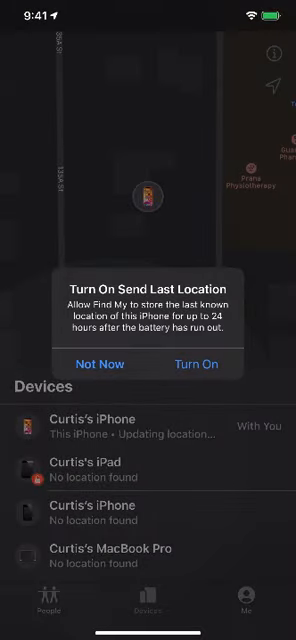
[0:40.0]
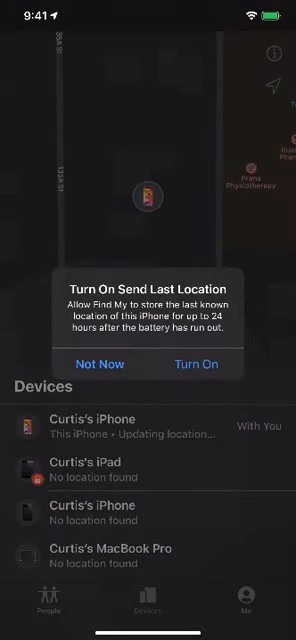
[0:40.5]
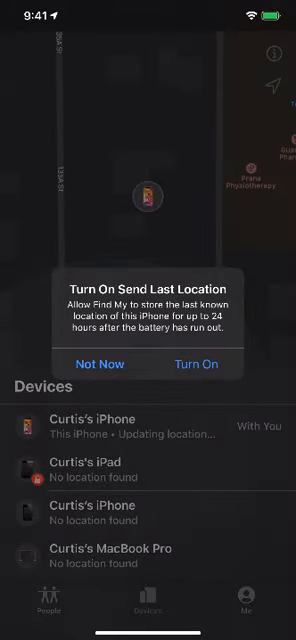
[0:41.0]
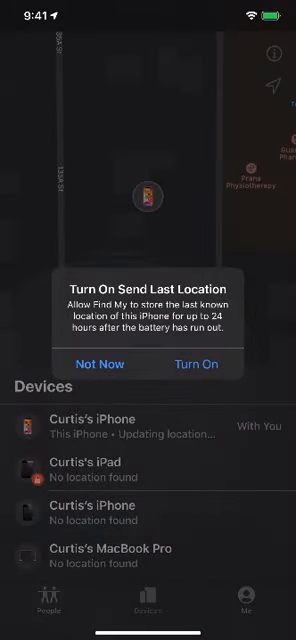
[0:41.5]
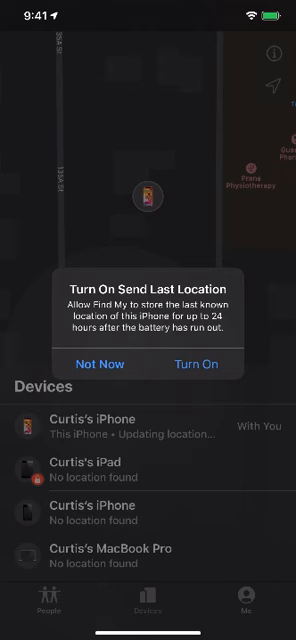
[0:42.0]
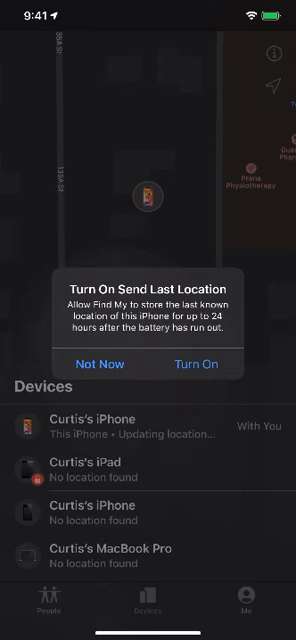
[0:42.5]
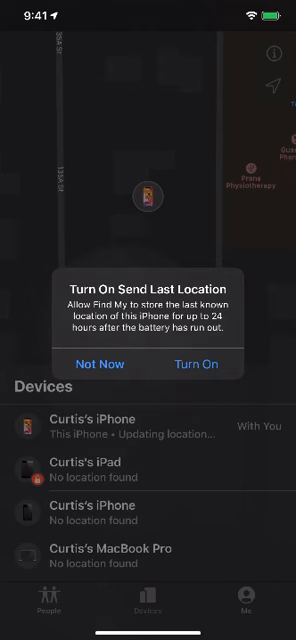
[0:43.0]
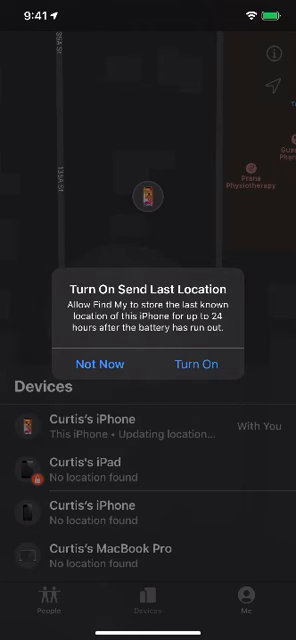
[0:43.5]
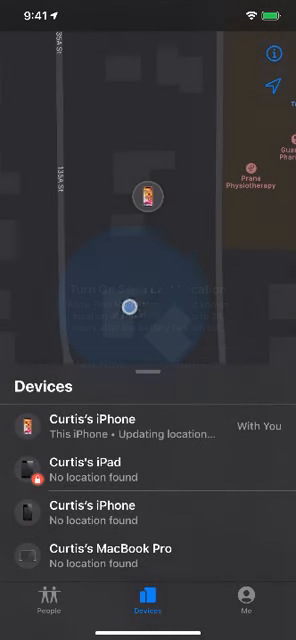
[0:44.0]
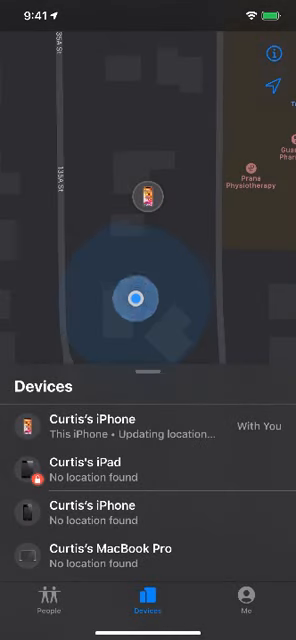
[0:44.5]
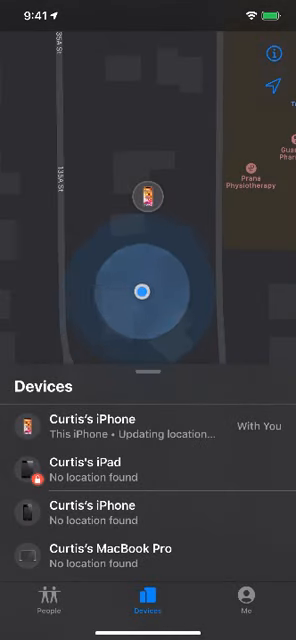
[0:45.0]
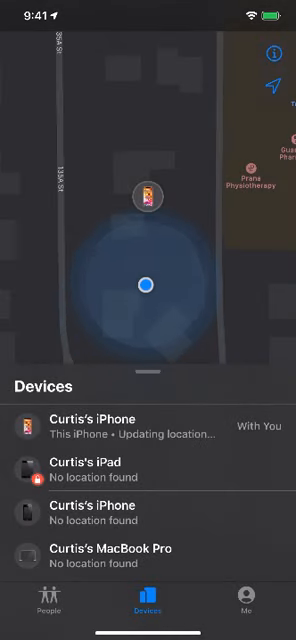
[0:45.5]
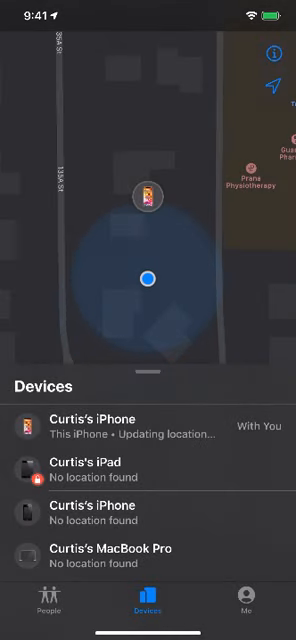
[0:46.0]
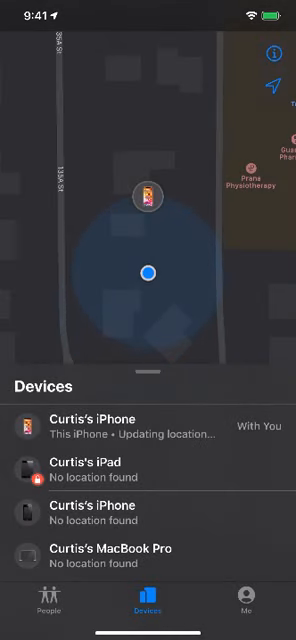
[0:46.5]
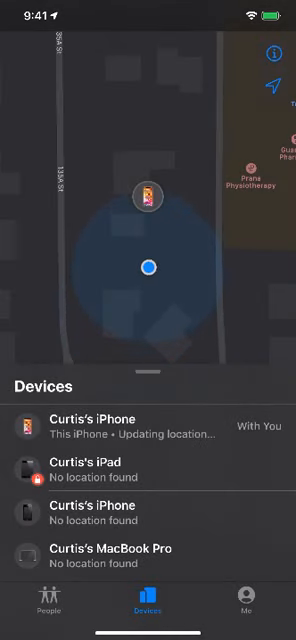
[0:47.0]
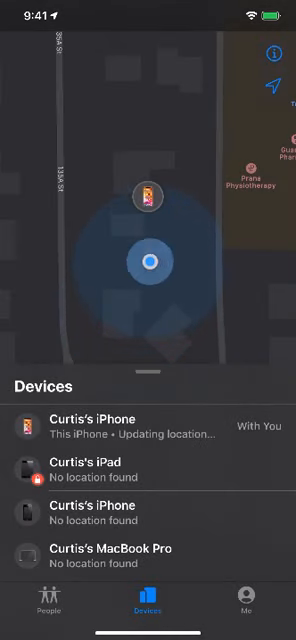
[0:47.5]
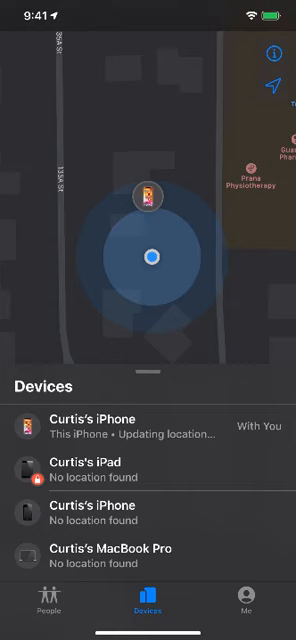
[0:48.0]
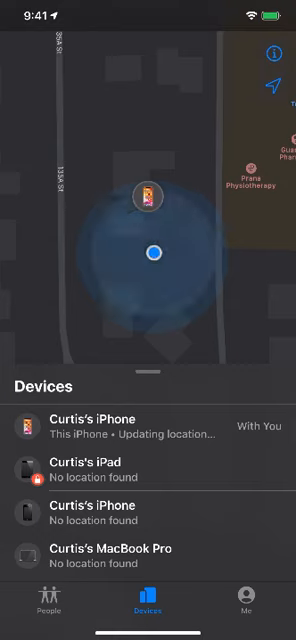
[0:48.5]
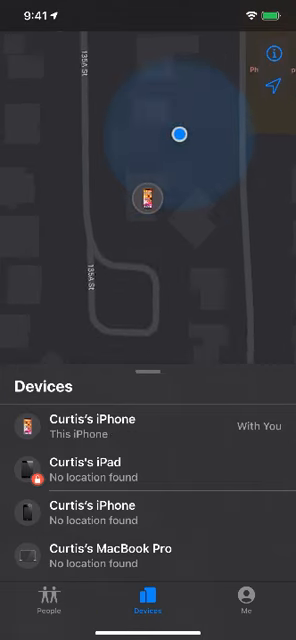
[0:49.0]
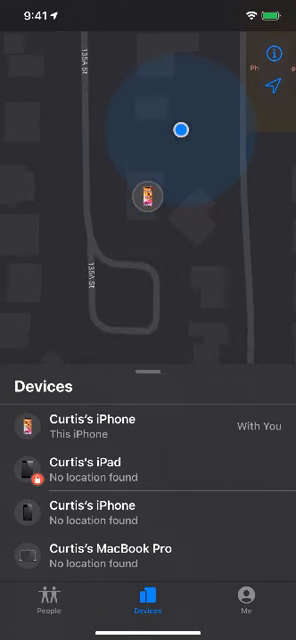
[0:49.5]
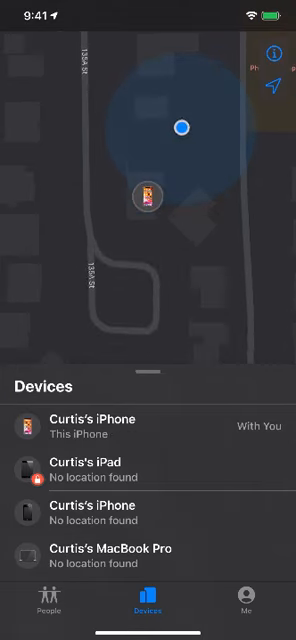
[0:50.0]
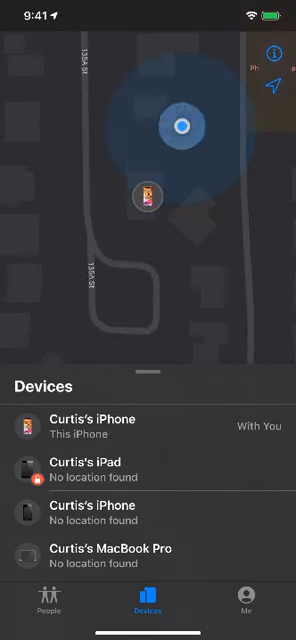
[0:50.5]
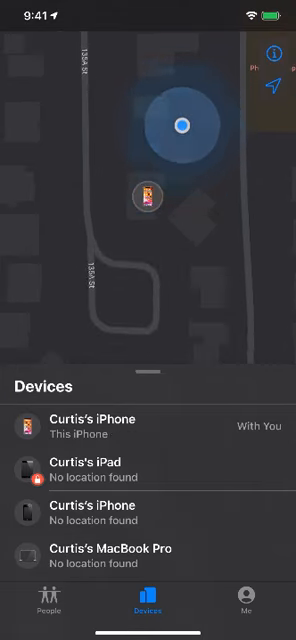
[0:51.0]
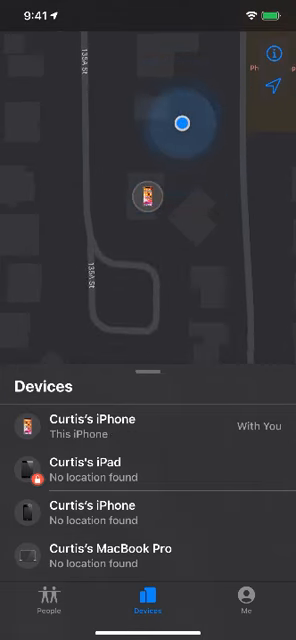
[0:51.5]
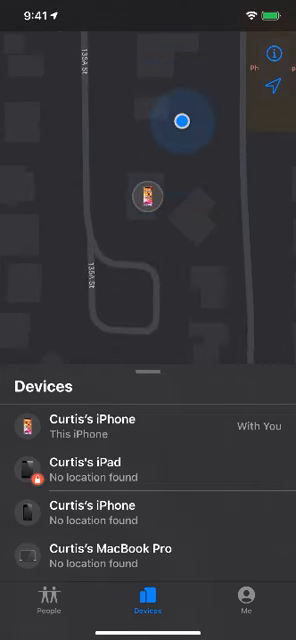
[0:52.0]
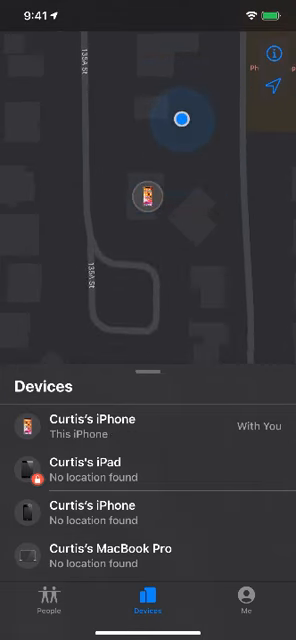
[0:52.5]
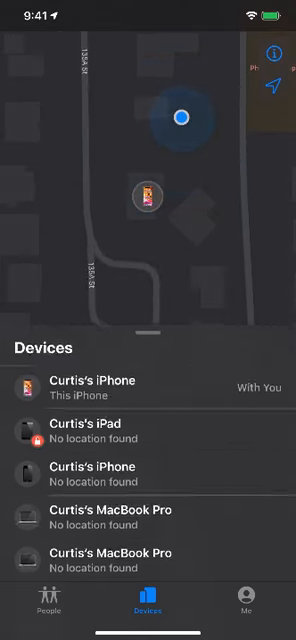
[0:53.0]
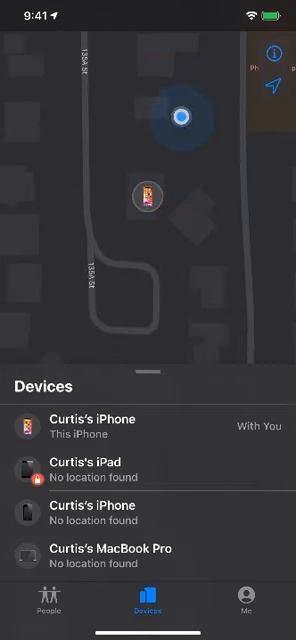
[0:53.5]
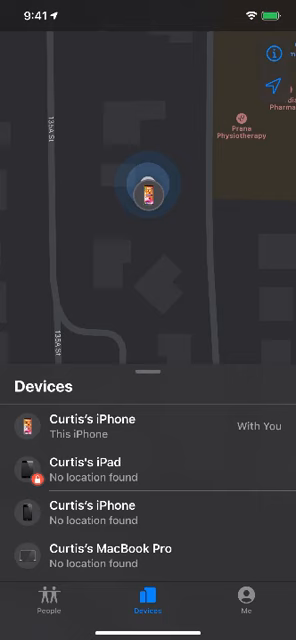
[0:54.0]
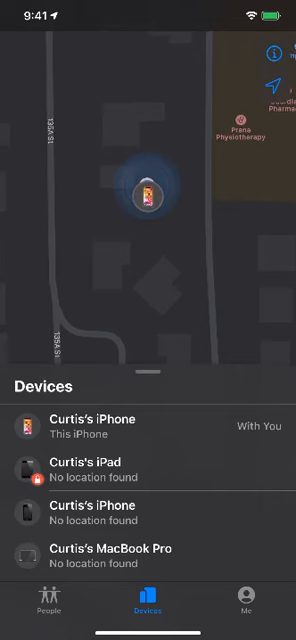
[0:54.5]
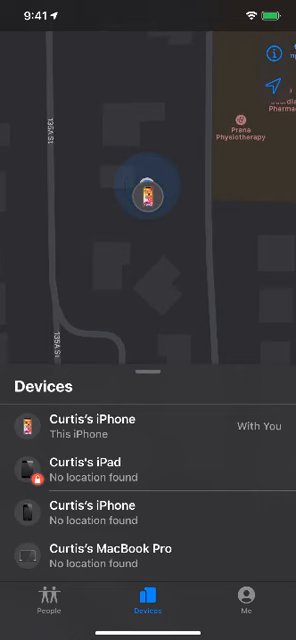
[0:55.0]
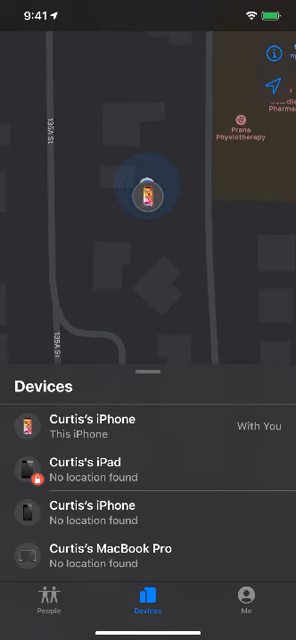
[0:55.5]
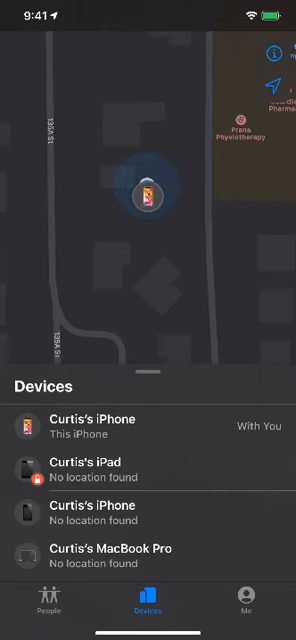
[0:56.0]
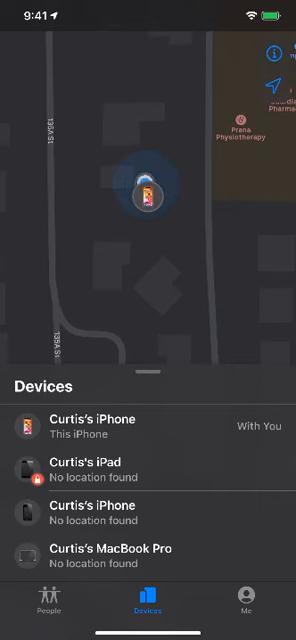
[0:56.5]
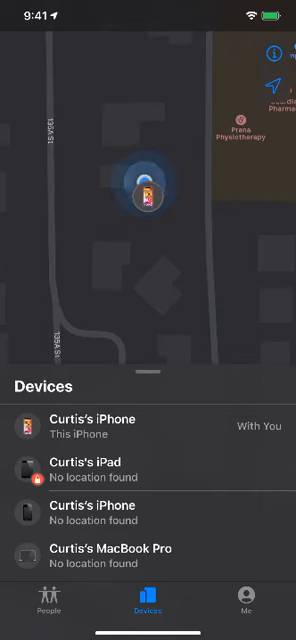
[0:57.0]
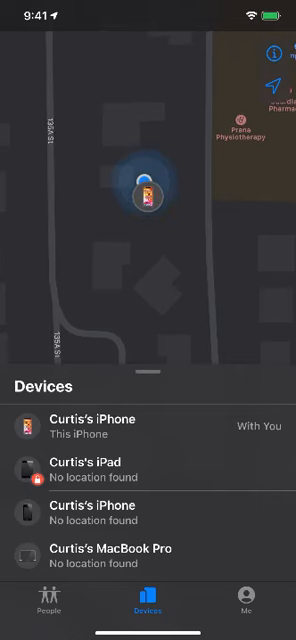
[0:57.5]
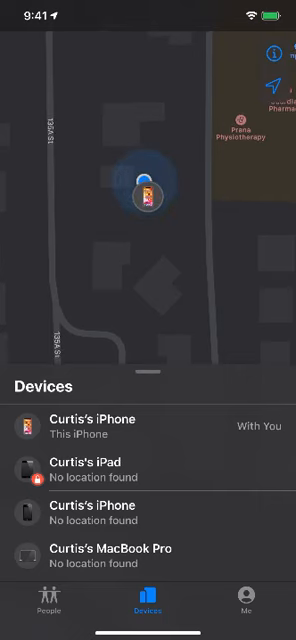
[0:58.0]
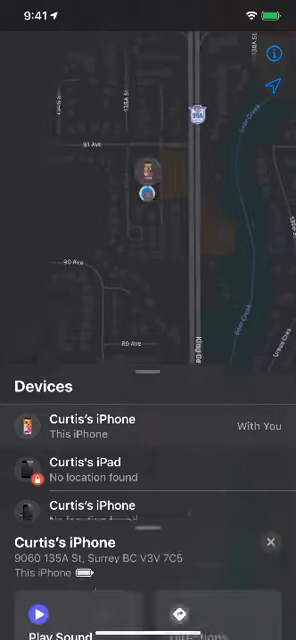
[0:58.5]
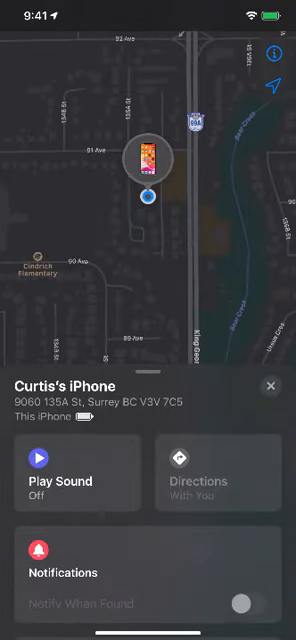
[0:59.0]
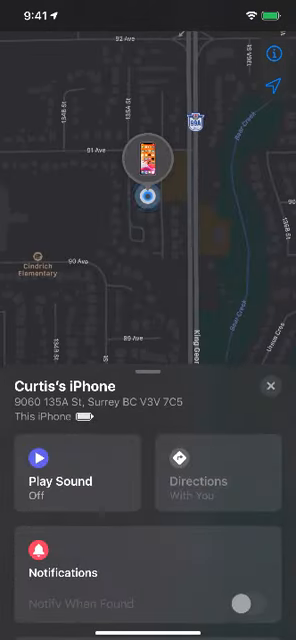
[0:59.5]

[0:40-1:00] The smartphone recording shows the Find My app open. A pop-up with white text reads "turn on send last location. Allow Find My to store the last known location of this iPhone for up to 24 hours after the battery has run out." It has two buttons: "not now" at the bottom left and "turn on" at the bottom right. Behind it is a map with a smartphone icon in a white circle, and the bottom of the screen lists multiple devices. The user taps Turn On and the pop-up closes. A blue dot slowly approaches the smartphone icon, which rapidly teleports to a house on a flat map. The blue dot then moves to a different house, and the phone icon follows and rapidly teleports, apparently showing some desync in the phone's GPS information.